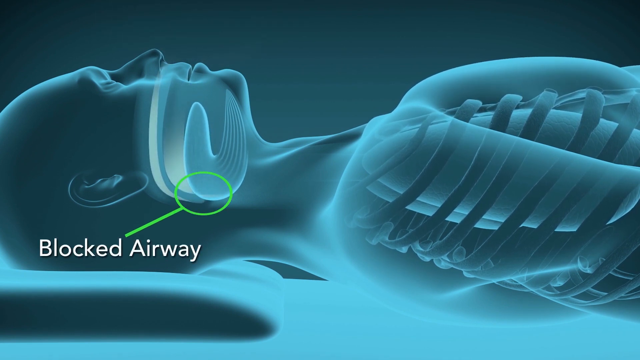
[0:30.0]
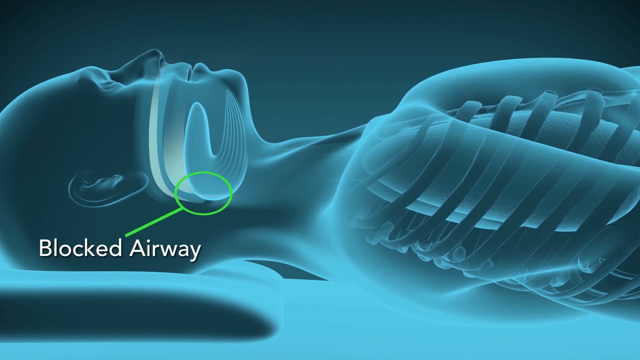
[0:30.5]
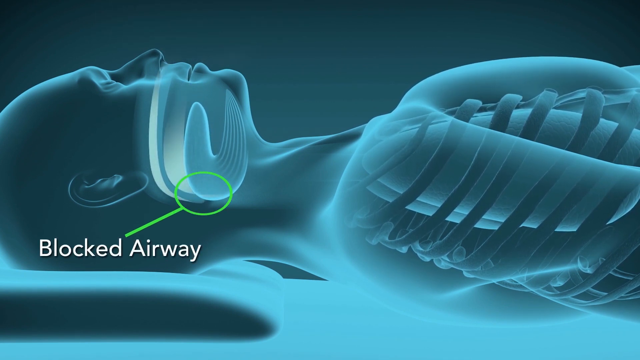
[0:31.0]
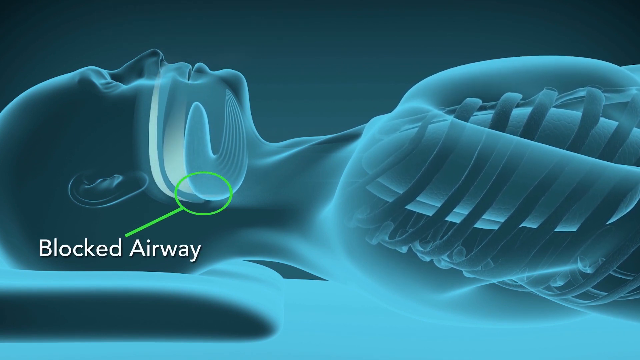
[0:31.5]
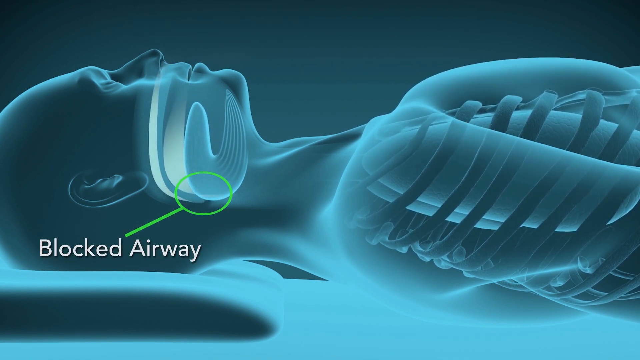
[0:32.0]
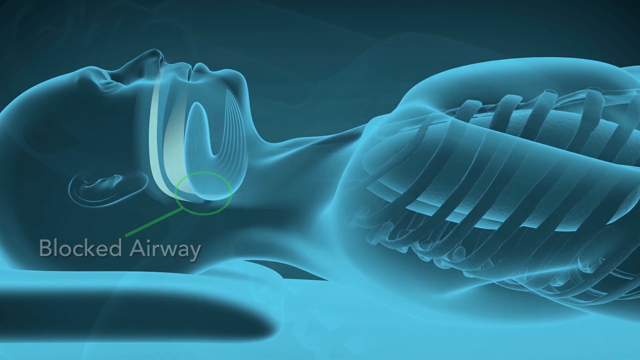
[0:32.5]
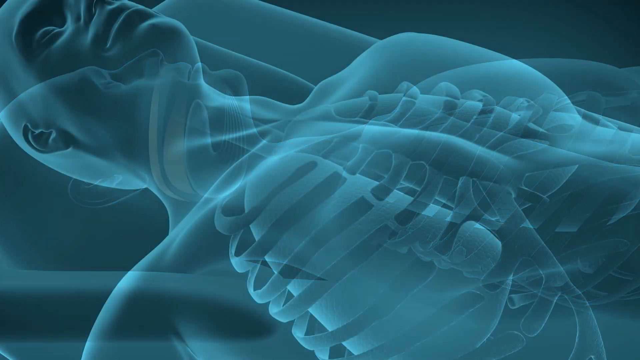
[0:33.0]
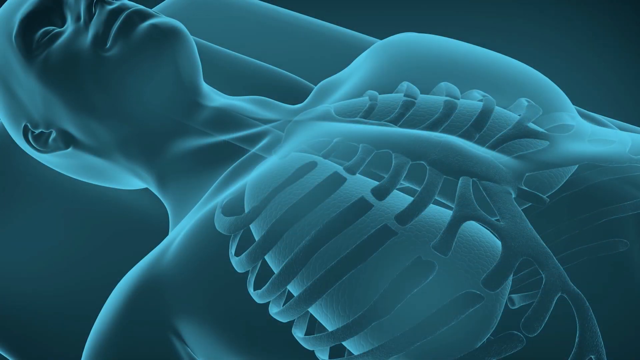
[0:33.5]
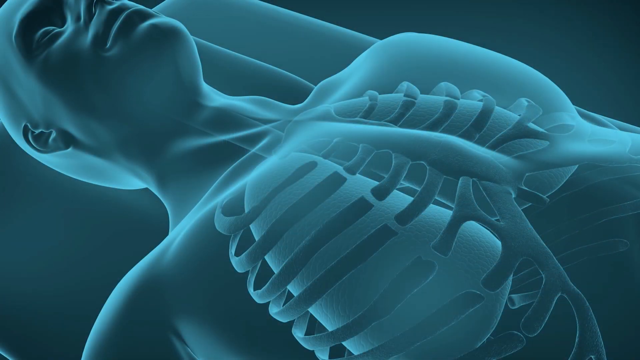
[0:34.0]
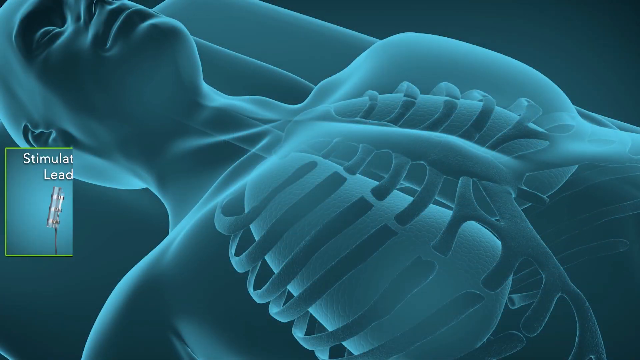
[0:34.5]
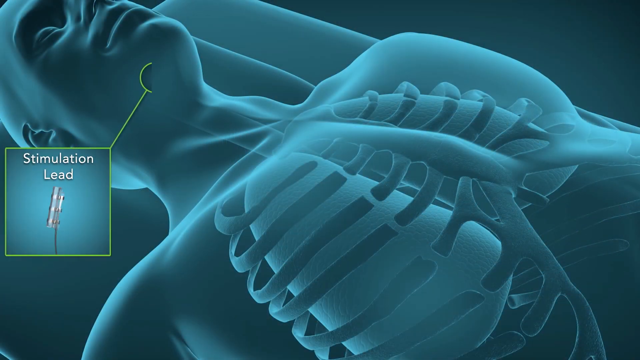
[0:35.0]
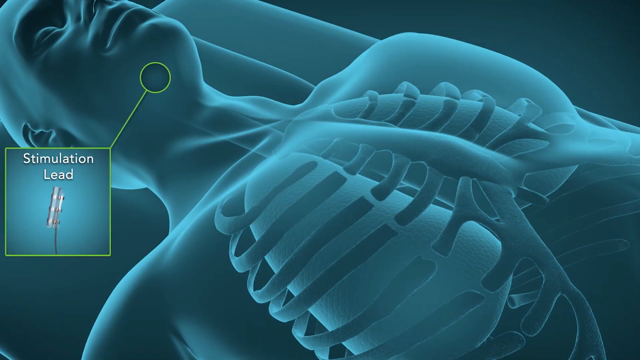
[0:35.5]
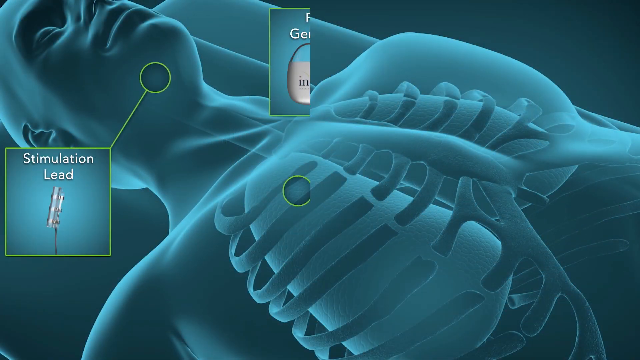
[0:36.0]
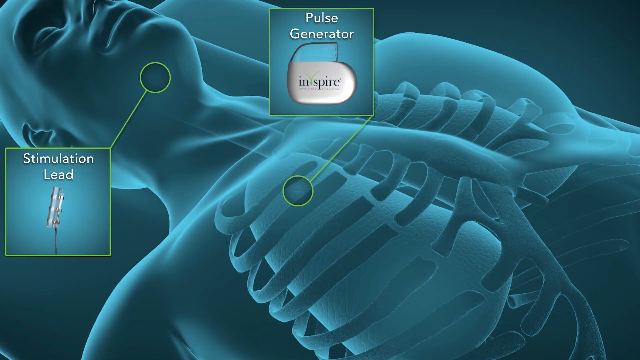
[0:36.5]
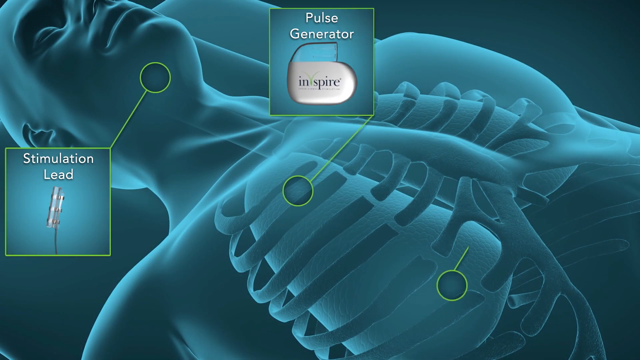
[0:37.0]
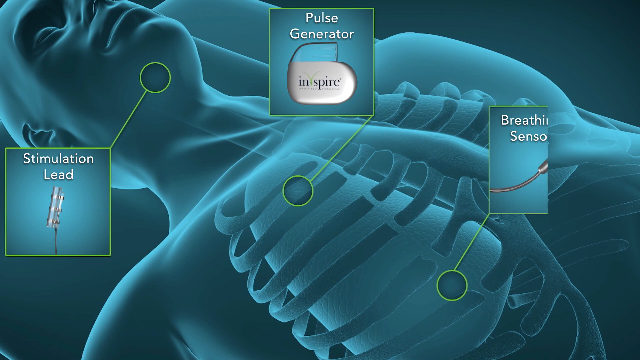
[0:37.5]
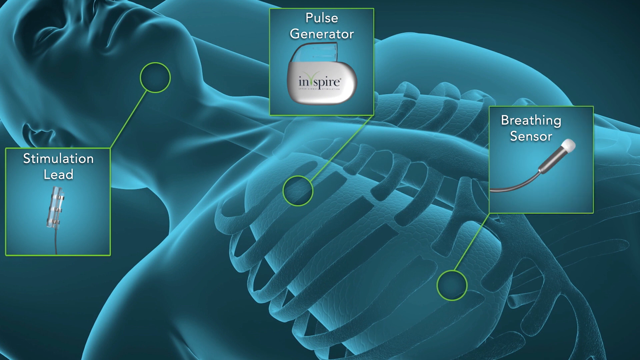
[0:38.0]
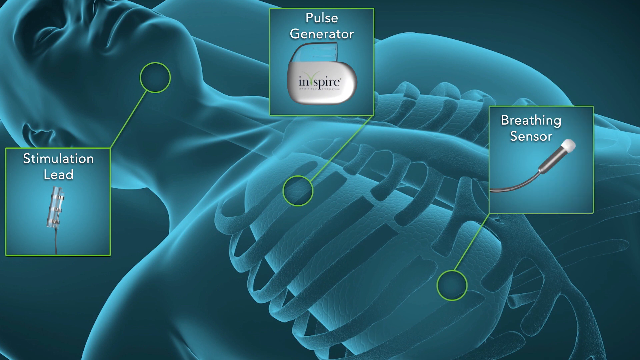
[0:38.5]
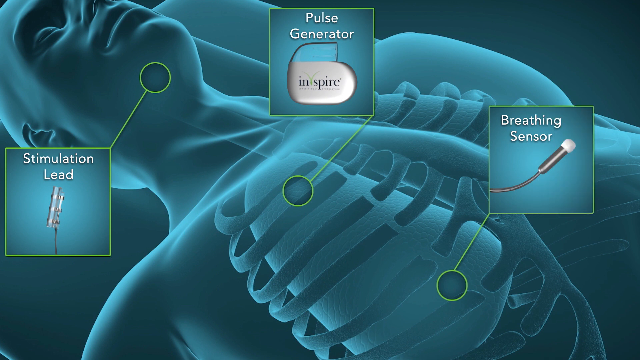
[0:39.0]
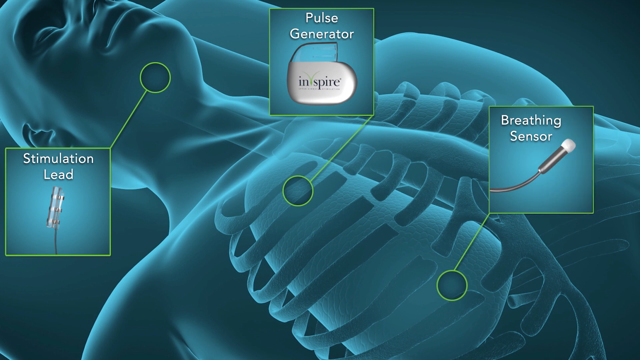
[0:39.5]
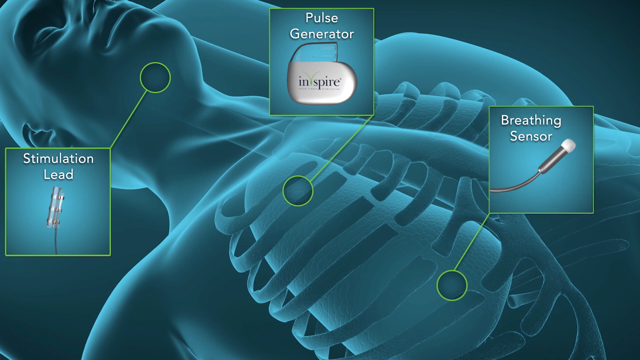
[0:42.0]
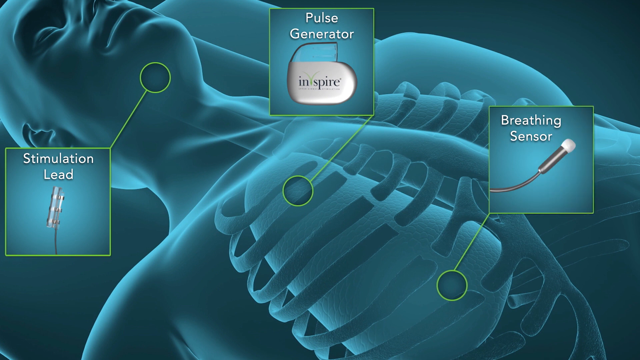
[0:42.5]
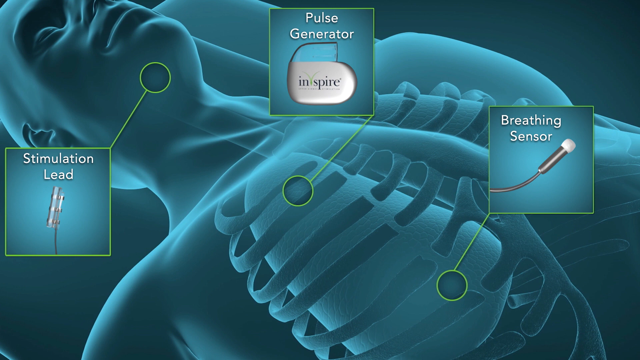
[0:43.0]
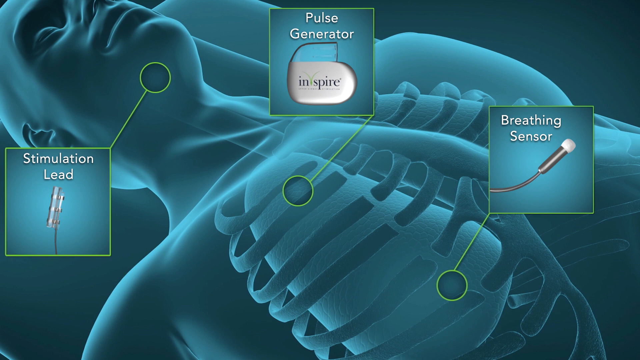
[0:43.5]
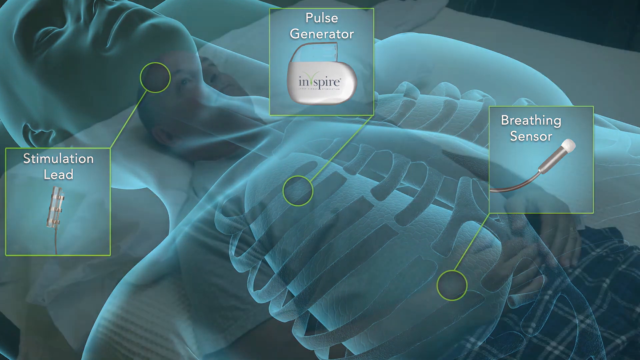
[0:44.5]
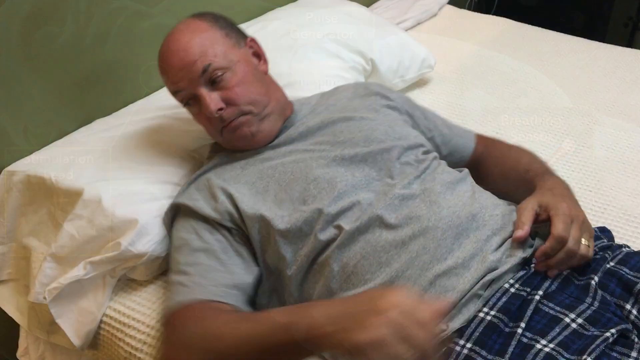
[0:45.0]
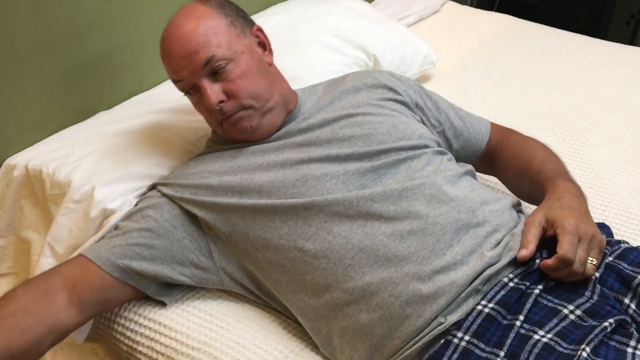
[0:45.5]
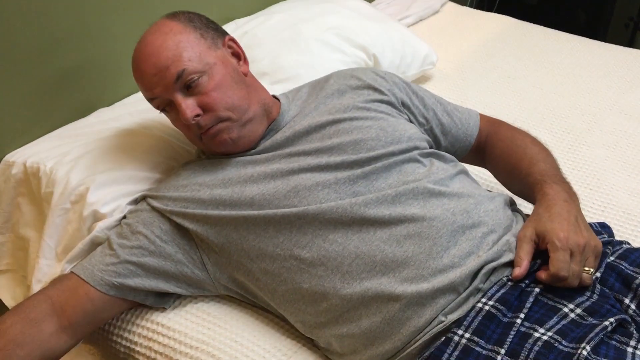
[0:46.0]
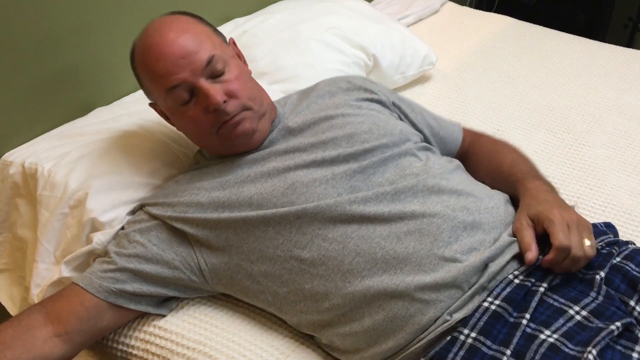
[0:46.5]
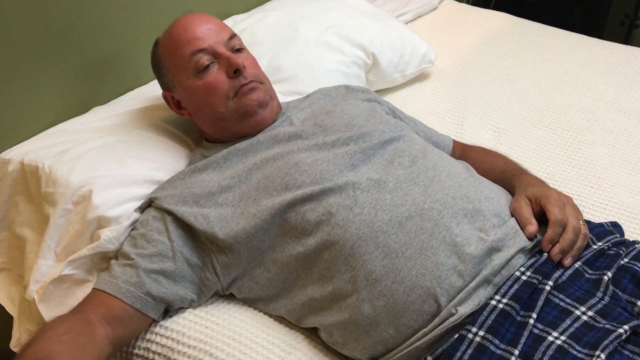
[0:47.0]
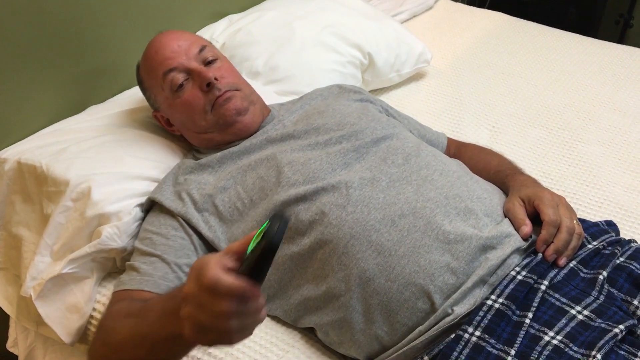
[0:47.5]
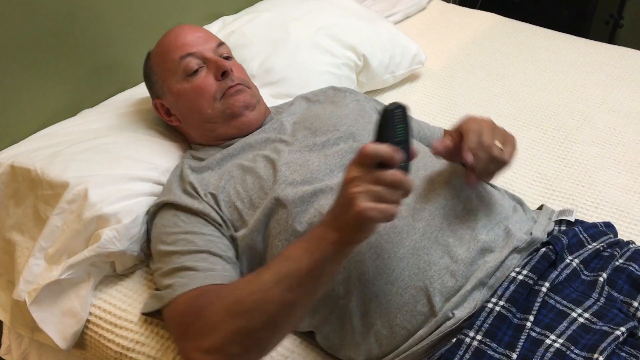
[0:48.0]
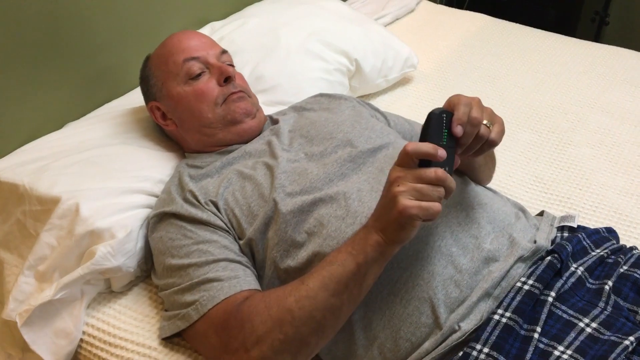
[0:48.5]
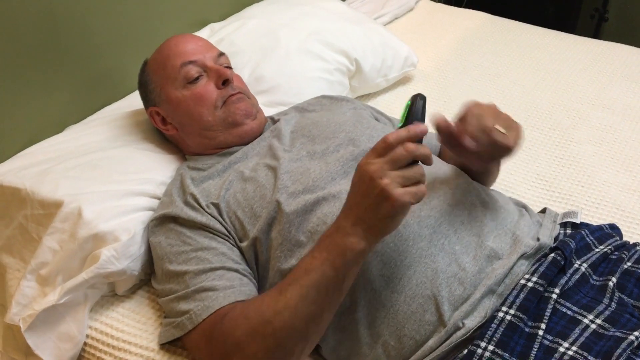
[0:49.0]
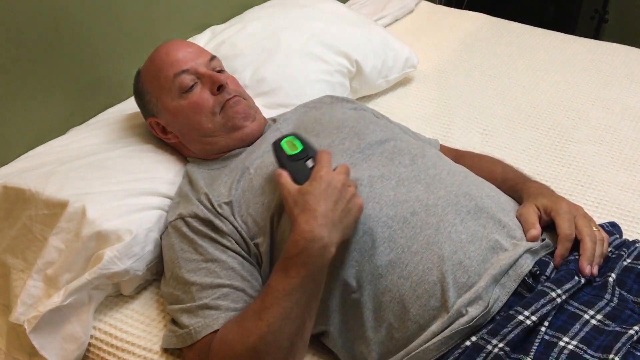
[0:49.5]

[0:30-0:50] The rendered figure breathes fast, and the next shot moves closer to its ribcage. Spots are pointed out through images: one refers to a place below the chin, another to the right side of the chest in between the ribcage, labeled as a pulse generator, and another near the bottom of the ribcage, still on the right side, labeled as a breathing sensor. Devices are suggested for each location. The next shot shows the same man as before, now lying down on a bed. He reaches for something off-screen on his right-hand side, which is the same device as before, checks the device, and then places it on the right-hand side of his chest using his right hand.